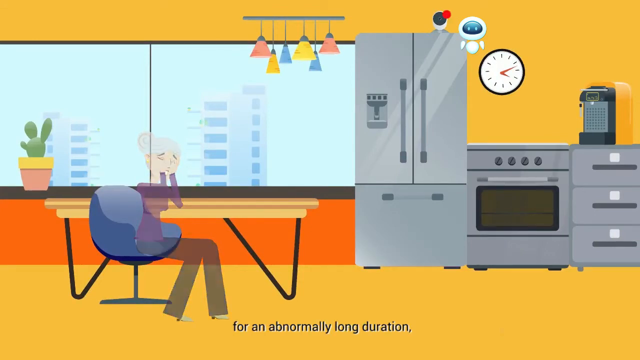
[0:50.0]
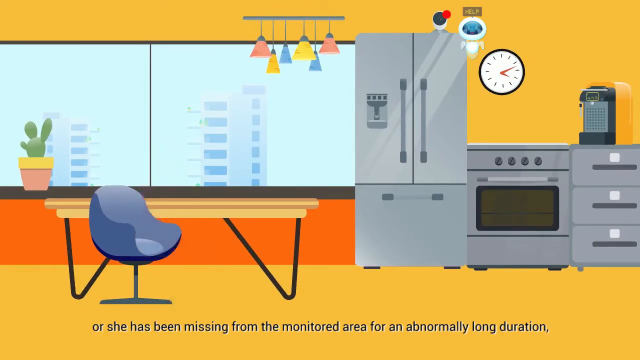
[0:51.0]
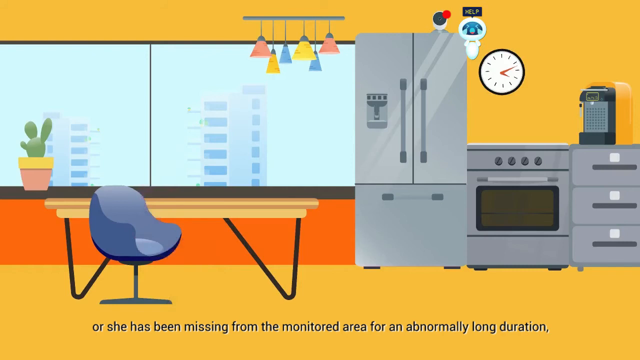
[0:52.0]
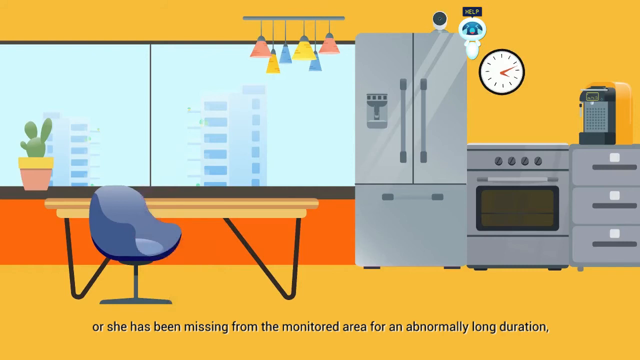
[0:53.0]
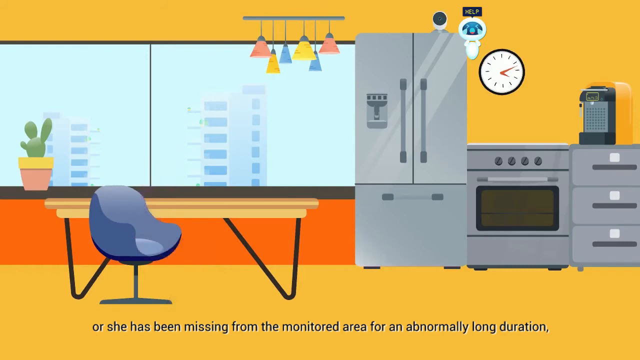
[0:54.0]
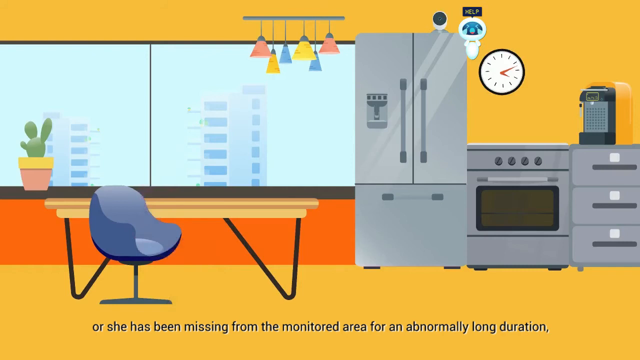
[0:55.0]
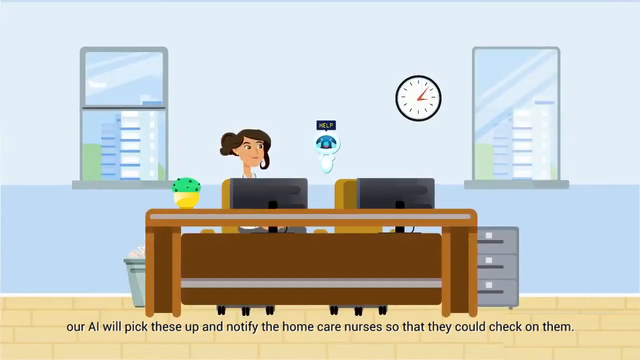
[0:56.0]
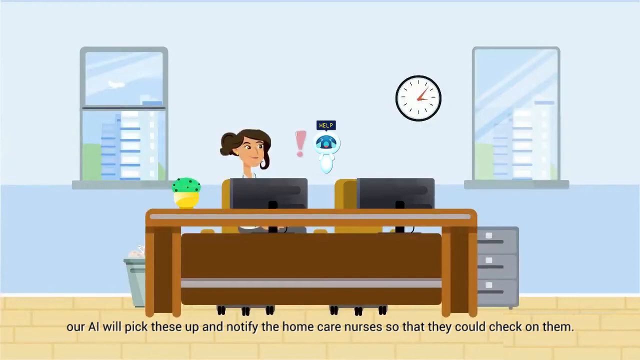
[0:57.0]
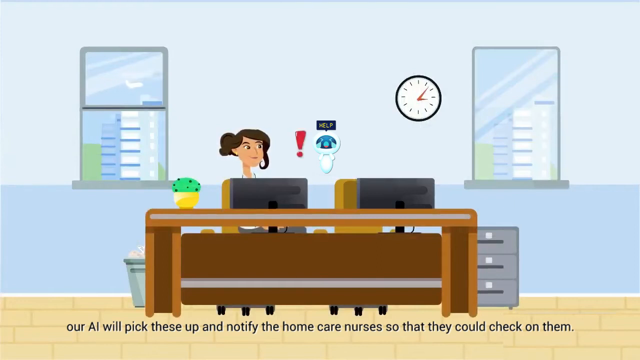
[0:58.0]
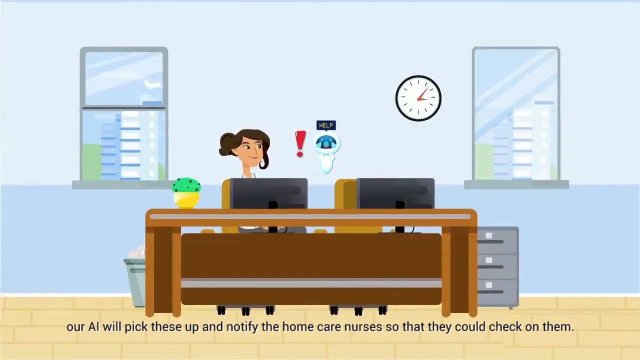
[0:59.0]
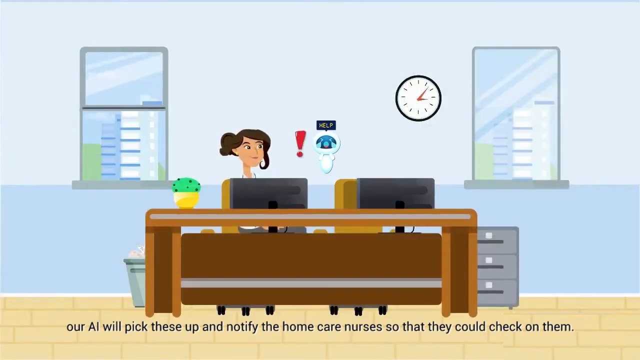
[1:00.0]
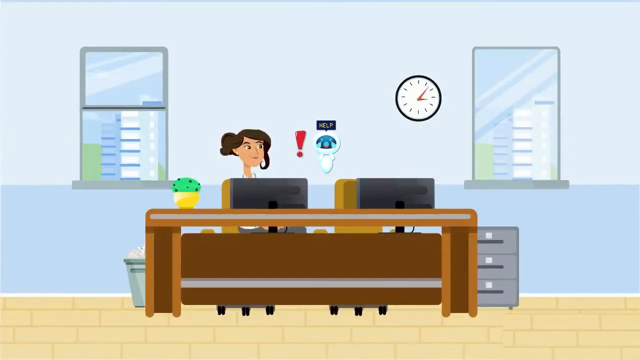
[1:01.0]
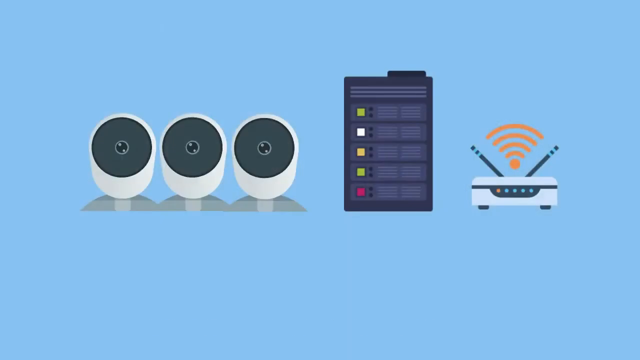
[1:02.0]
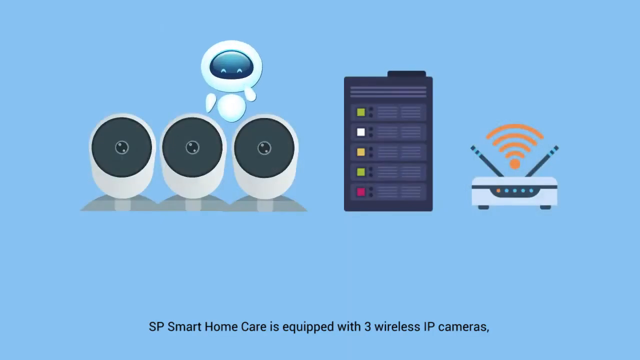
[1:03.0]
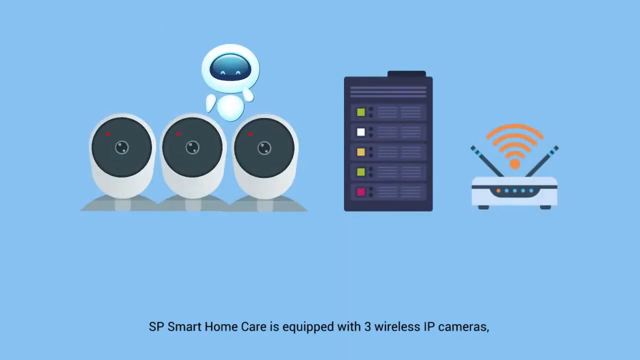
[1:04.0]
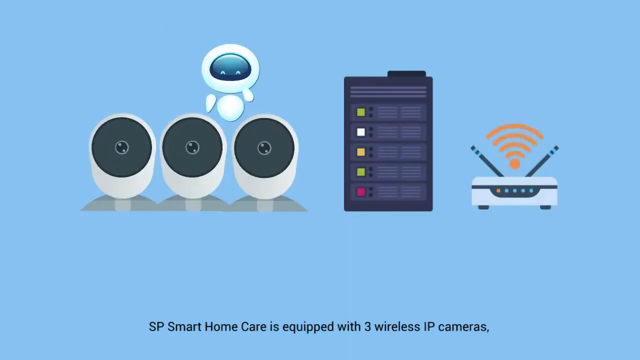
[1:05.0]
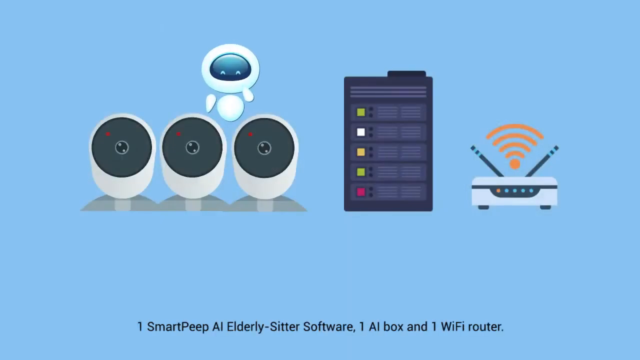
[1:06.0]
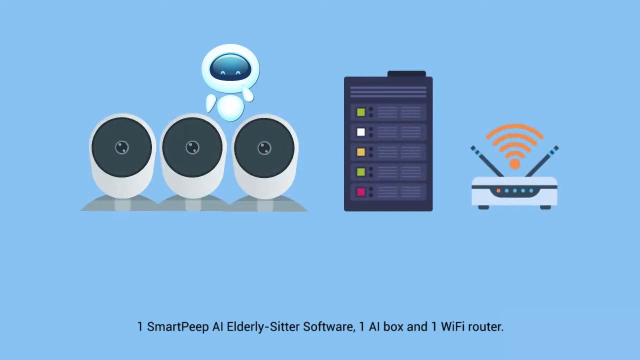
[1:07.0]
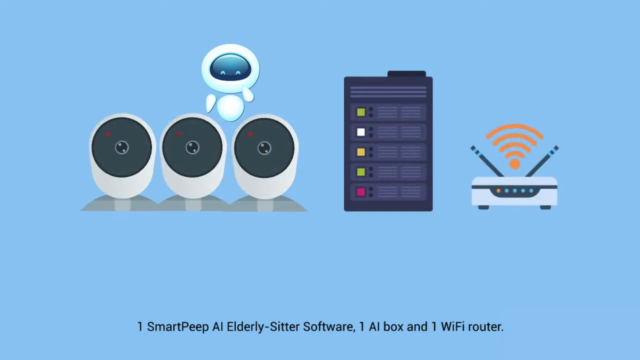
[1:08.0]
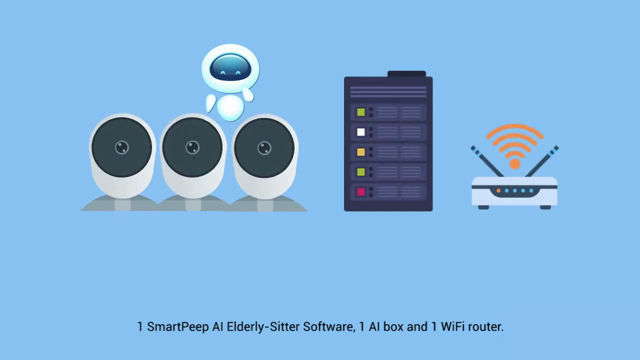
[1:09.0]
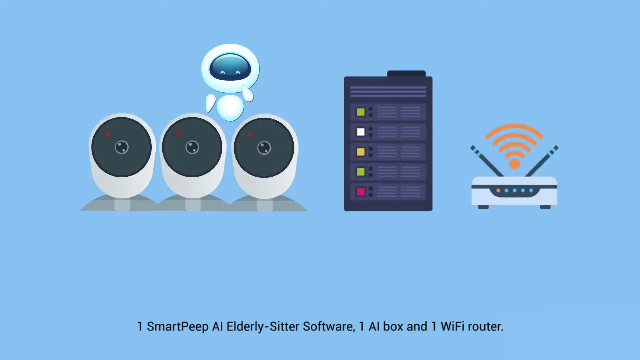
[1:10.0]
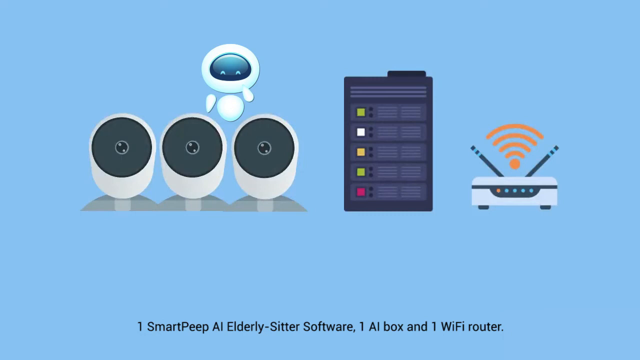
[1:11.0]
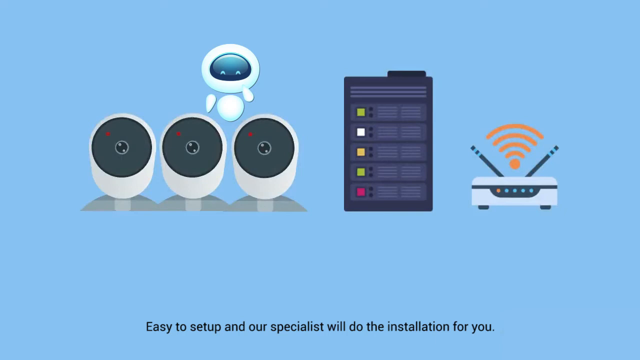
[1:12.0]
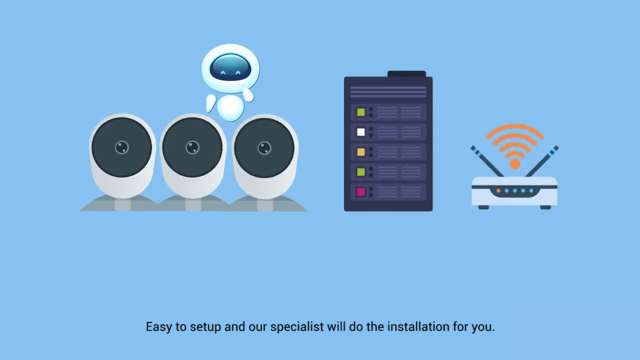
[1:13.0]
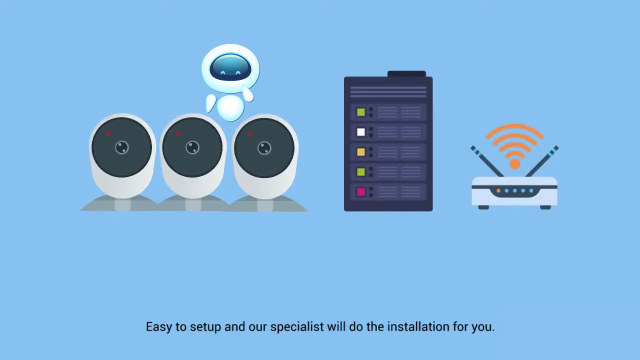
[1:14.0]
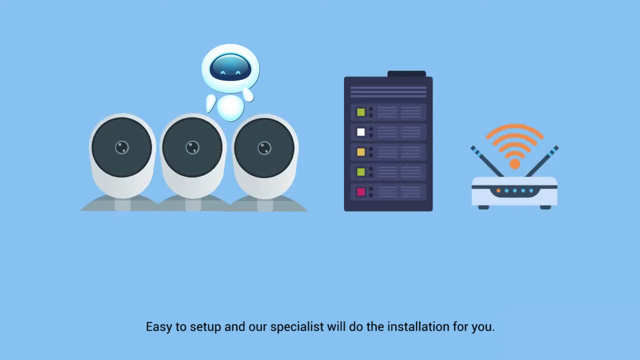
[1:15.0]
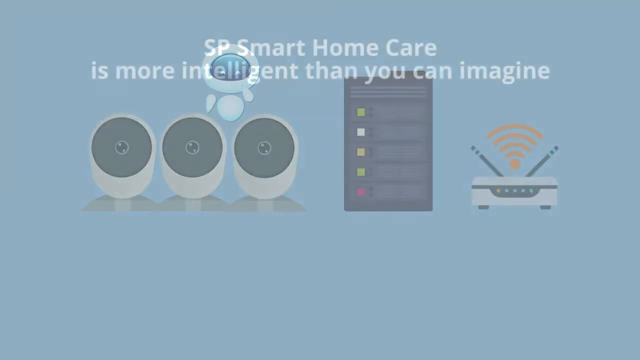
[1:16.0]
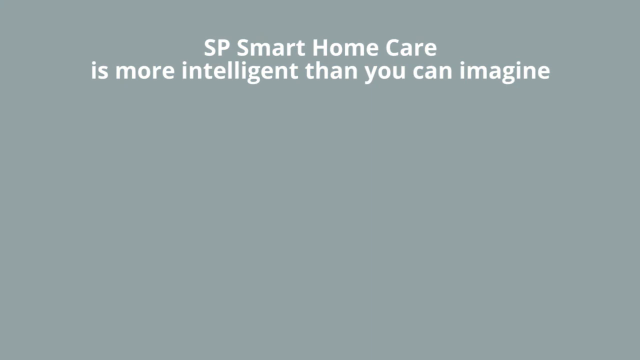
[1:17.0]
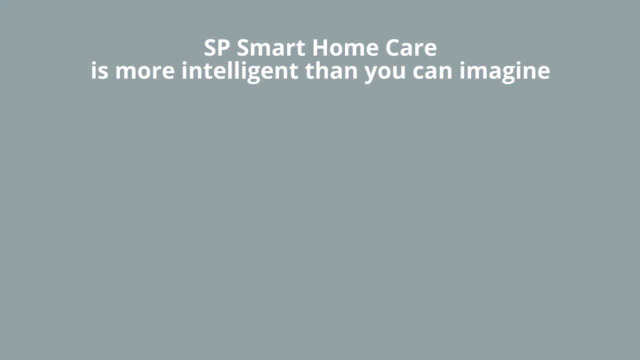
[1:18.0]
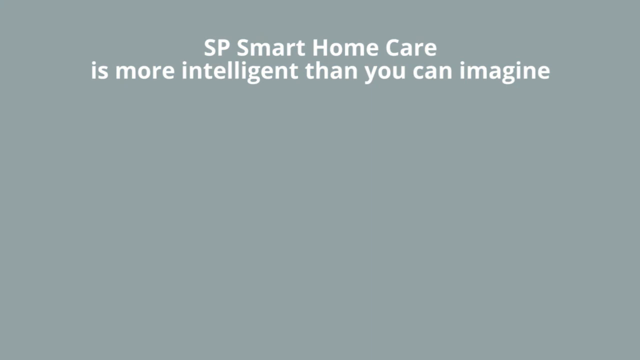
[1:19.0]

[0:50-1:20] In cartoon style, an older woman sits in a chair and then disappears from it, with text at the bottom saying "or she has been missing from the monitored area for an abnormally long duration." A small flashing sensor is on top of a fridge. The scene changes to an office setting with a robot that says help and text that says "our AI will pick these up and notify the home care nurses so that they could check on them". It cuts to a cartoon-style diagram of monitoring equipment with the text "SP Smart Home Care is equipped with three wireless IP cameras. One SmartPeep AI Elderly Sitter software, one AI box, and one Wi-Fi router. Easy to set up. And our specialist will do the installation for you." It changes to a grey background with the text "SP Smart Home Care is more intelligent than you can imagine."